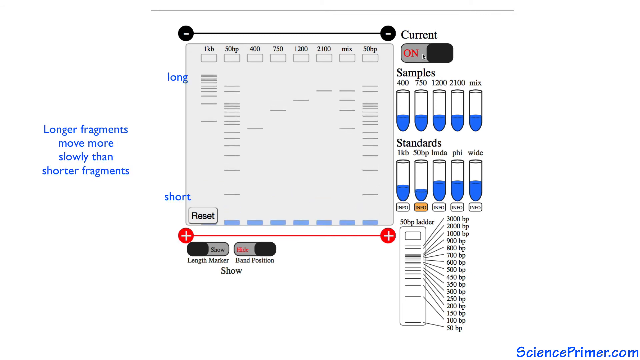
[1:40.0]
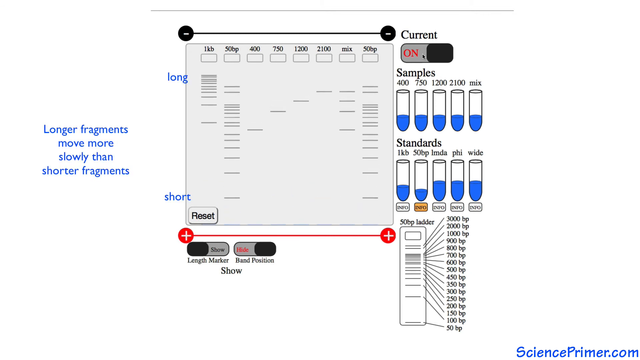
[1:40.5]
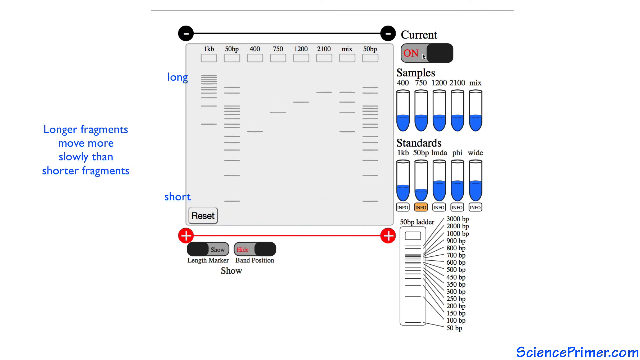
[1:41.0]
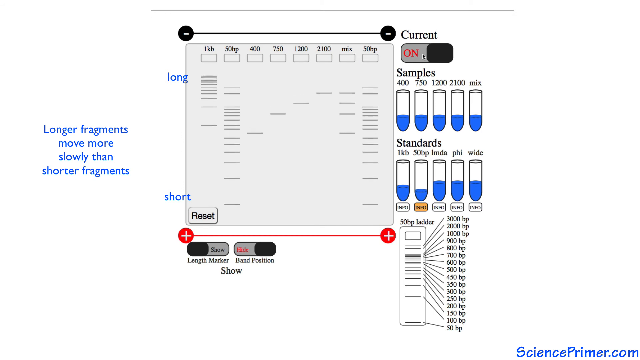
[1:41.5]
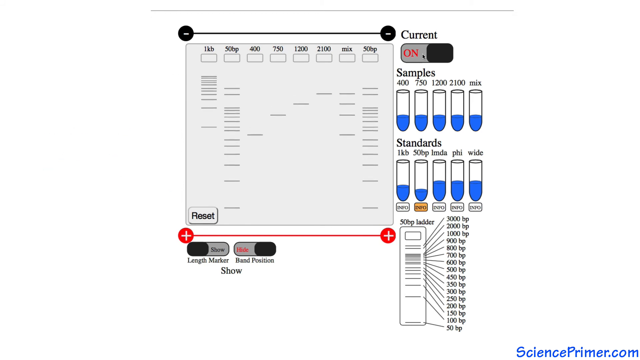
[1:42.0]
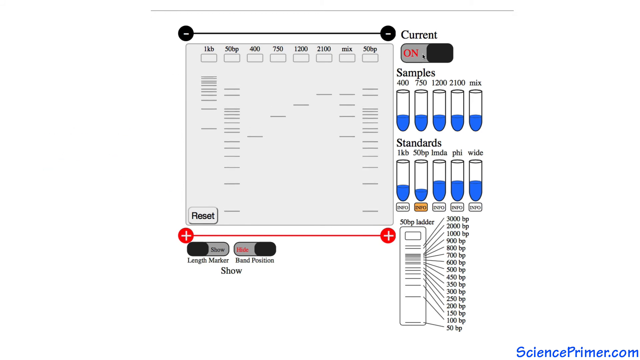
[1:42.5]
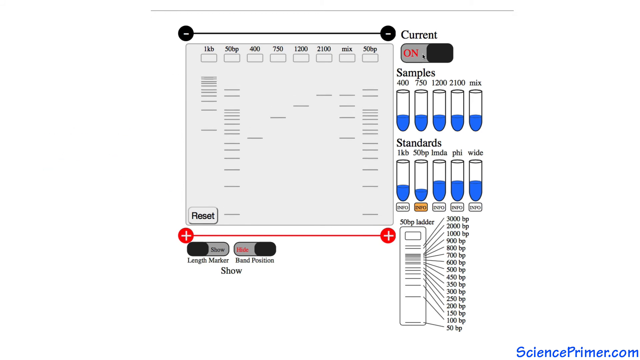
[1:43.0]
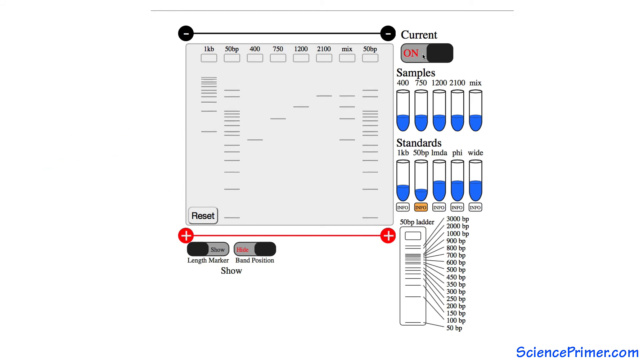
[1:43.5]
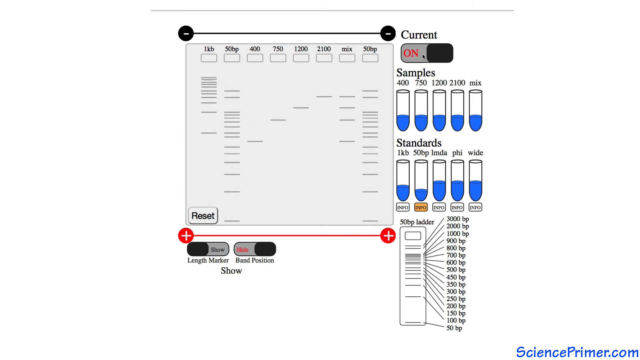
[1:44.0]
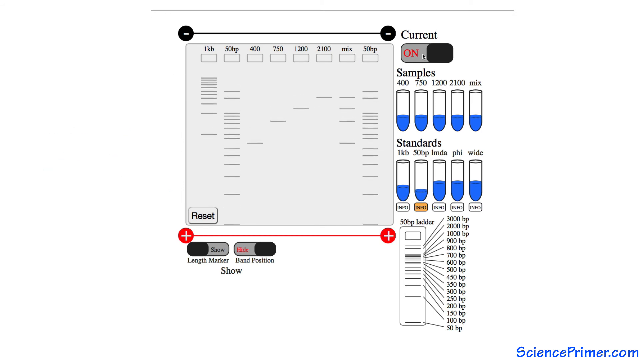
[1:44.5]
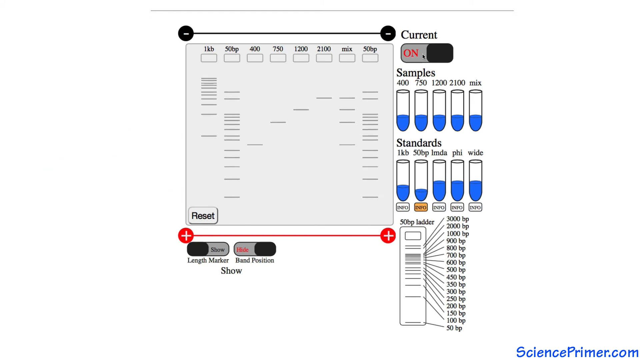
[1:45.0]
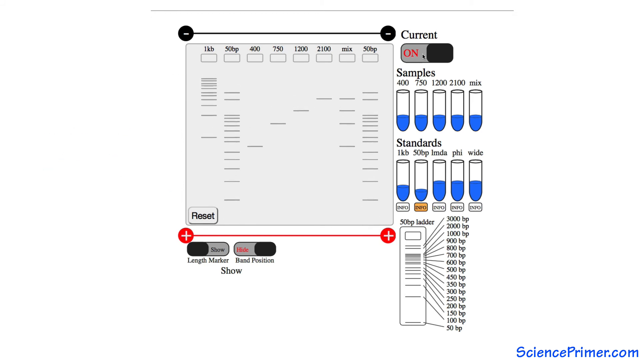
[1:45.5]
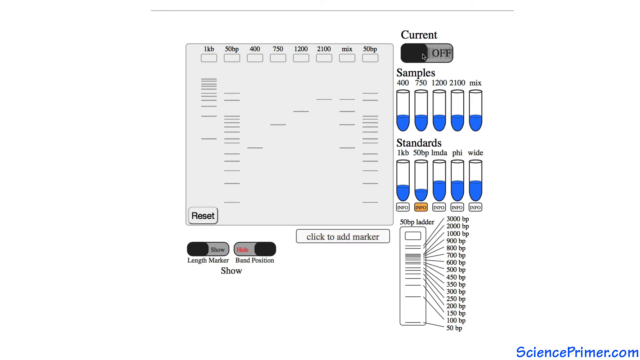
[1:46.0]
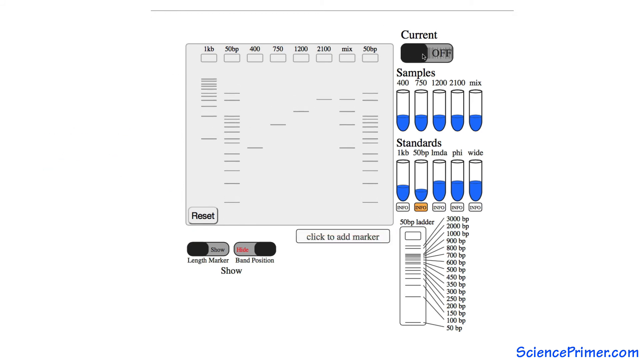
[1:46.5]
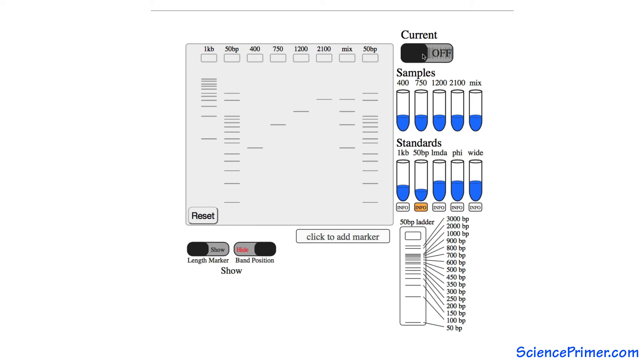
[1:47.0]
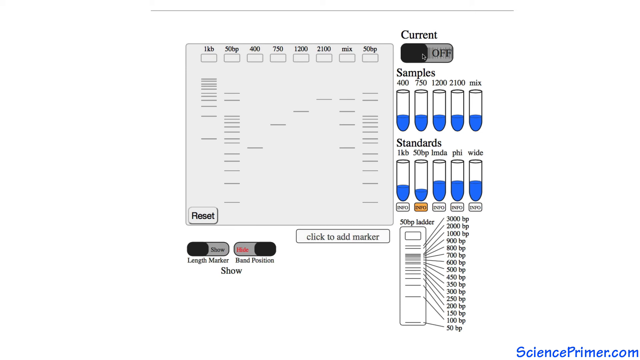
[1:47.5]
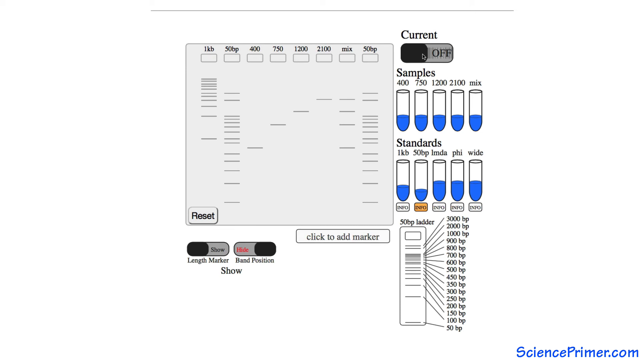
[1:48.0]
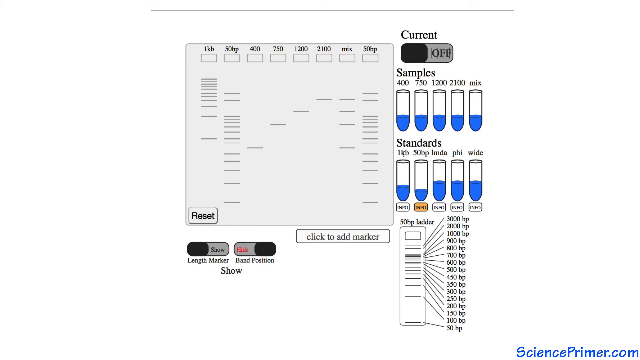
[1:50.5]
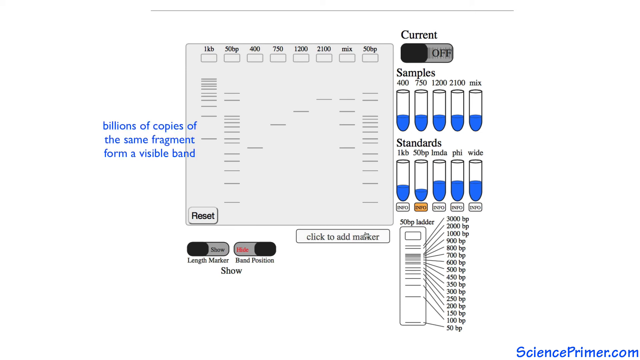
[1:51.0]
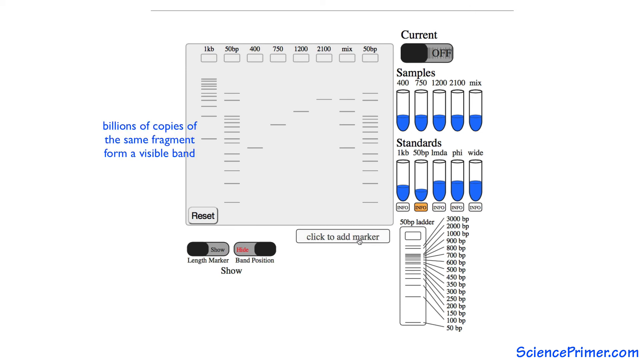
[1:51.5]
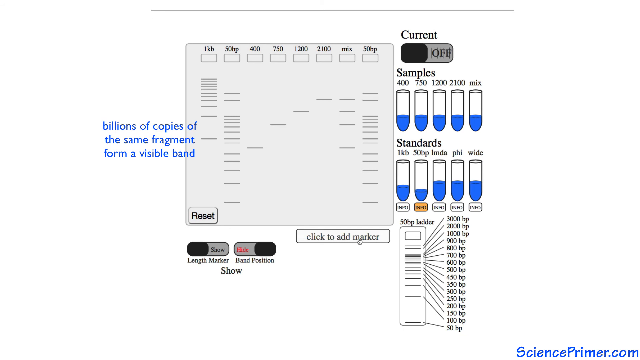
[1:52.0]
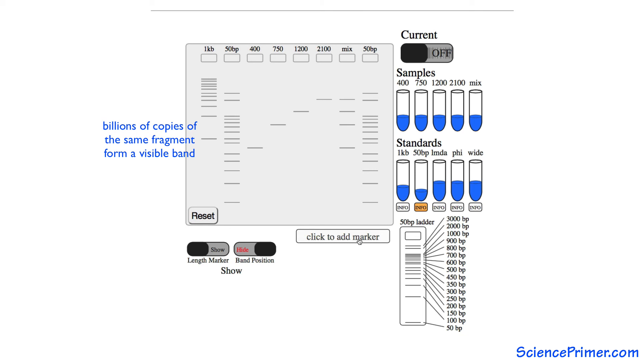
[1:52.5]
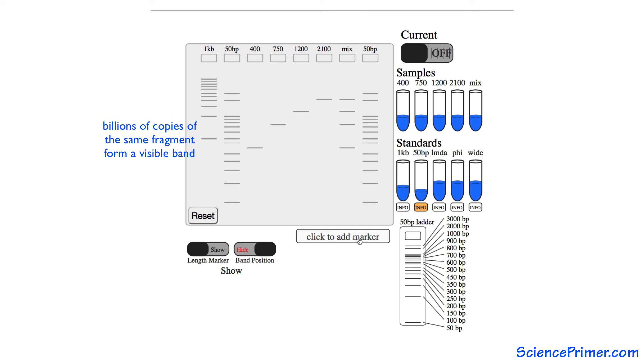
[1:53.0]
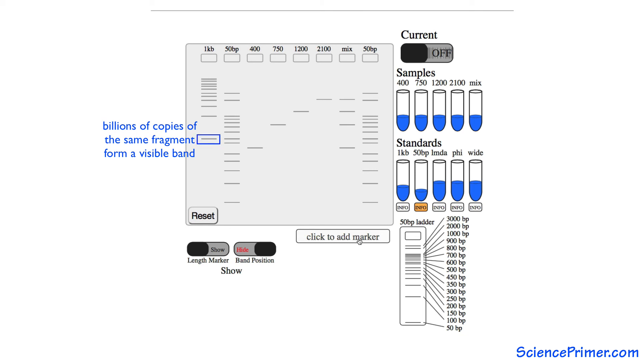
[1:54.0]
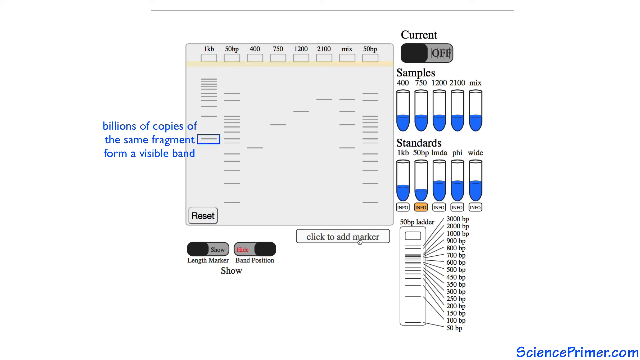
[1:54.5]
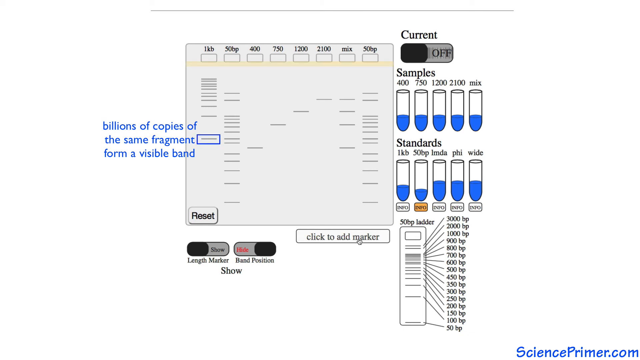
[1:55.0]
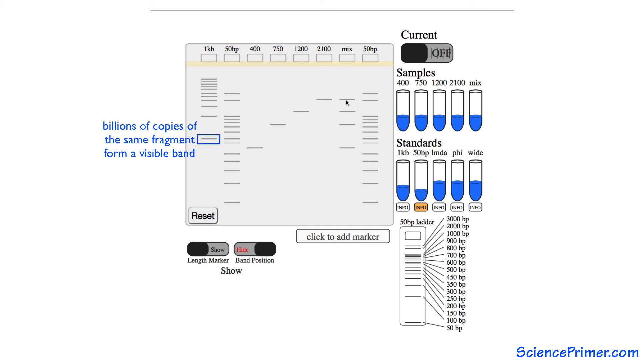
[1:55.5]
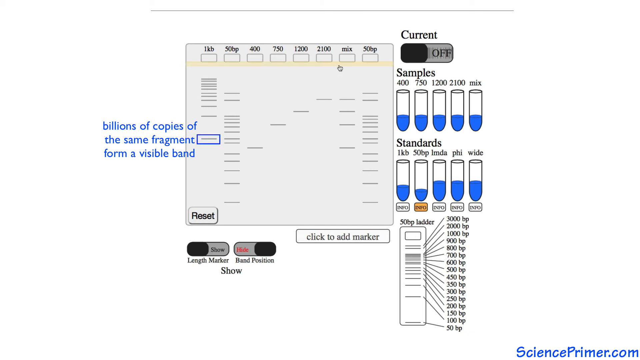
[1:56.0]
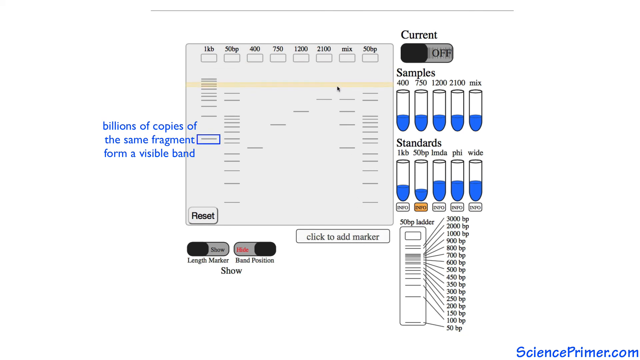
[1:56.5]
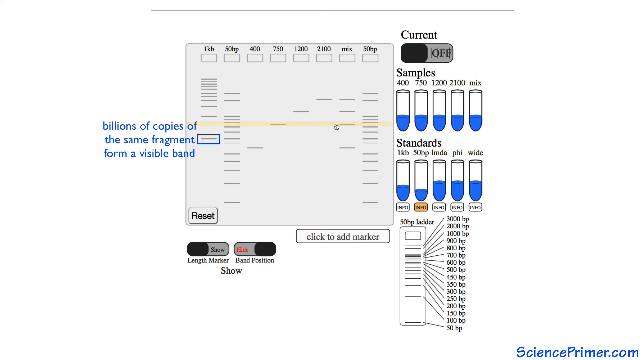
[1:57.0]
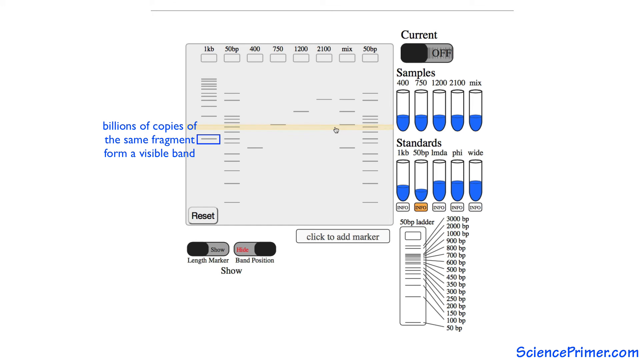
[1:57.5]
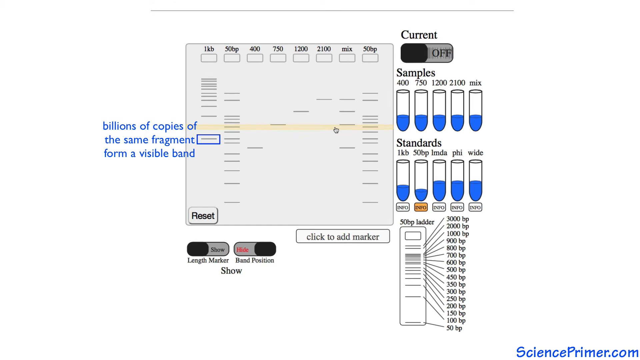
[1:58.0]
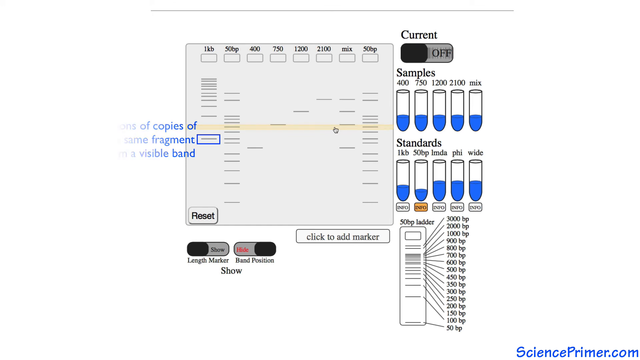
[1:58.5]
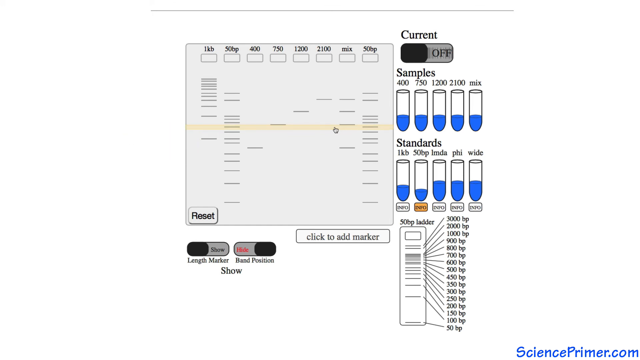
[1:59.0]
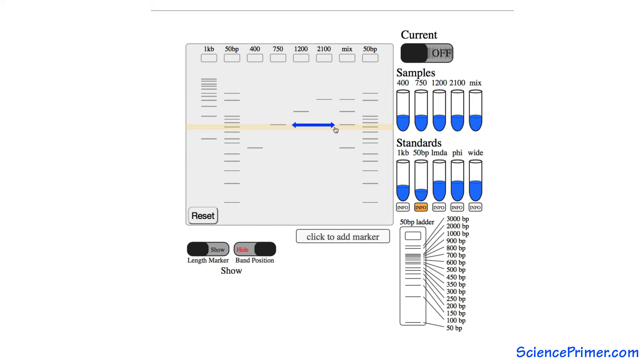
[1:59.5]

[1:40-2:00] The long and short fragments are labeled with blue text. The longer segments seem to be displayed in rows that are more dense, while the short ones have only a few. The caption and the blue lines disappear, and the gray lines appear, moving down and disappearing at the bottom. The rectangle for the second test tube on the second row is highlighted in orange. A rectangular button has appeared on top of the red line with the two plus signs on either side; at the bottom right side of the experiment, black text on it says "click to add marker." A blue caption appears on the left side of the experiment that says "billions of copies of the same fragment form a visible band," most likely referring to the multiple small gray lines that are closer together.